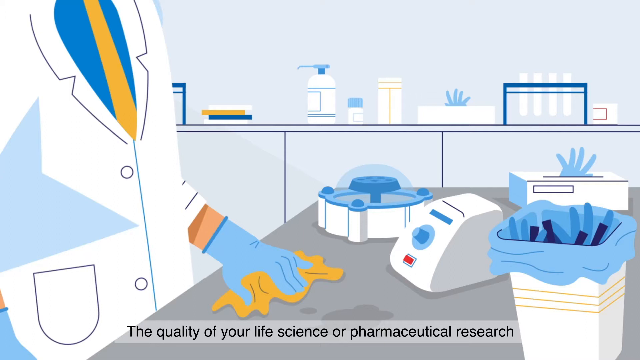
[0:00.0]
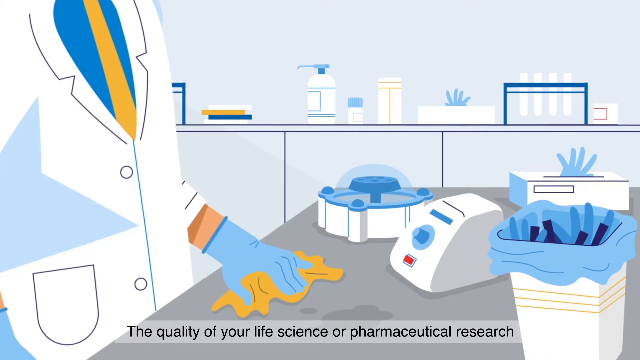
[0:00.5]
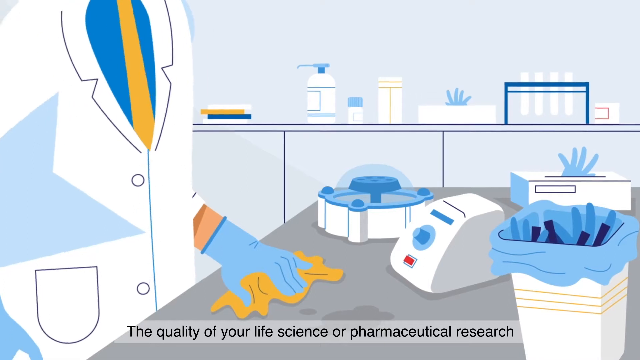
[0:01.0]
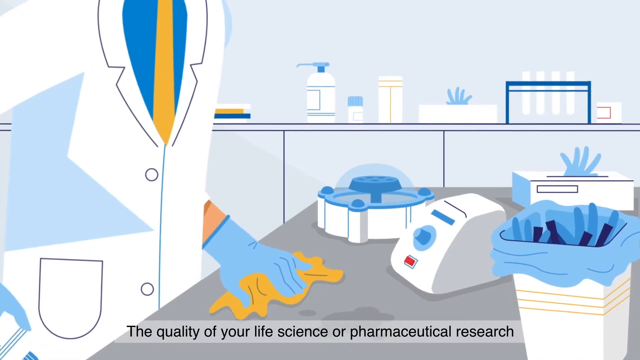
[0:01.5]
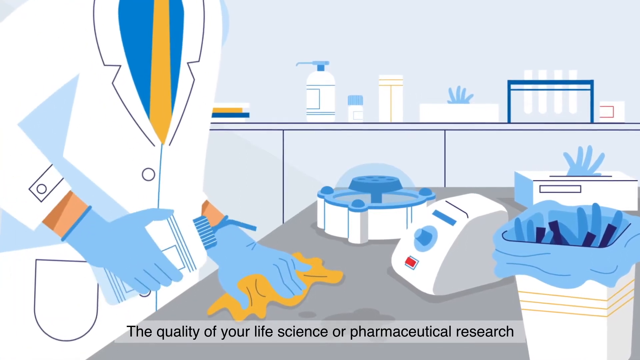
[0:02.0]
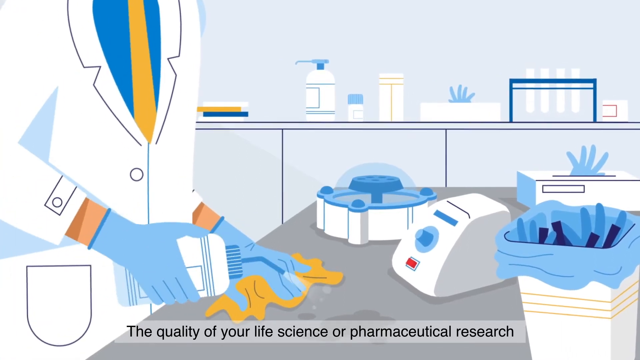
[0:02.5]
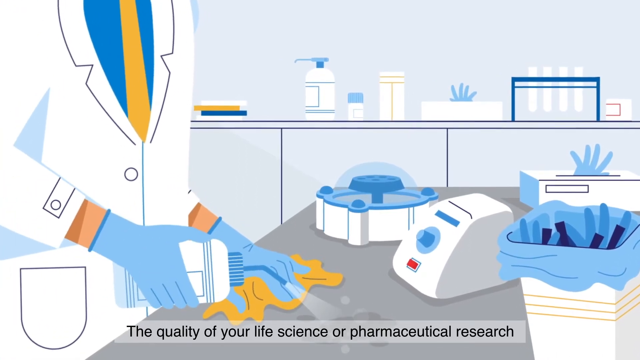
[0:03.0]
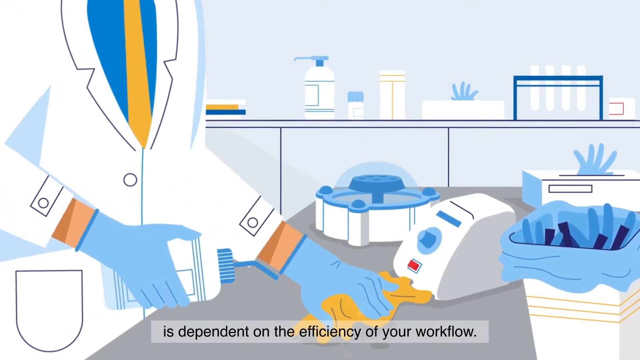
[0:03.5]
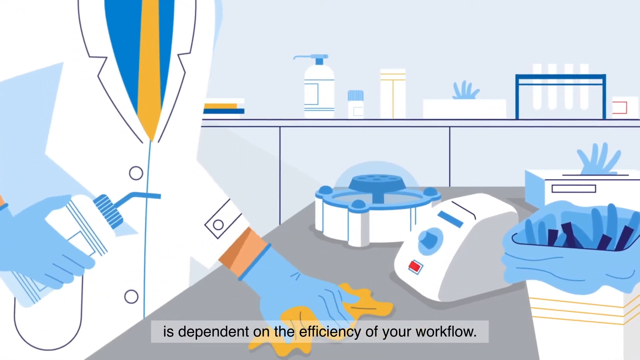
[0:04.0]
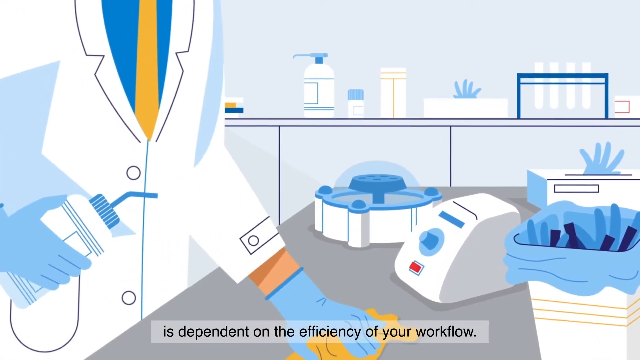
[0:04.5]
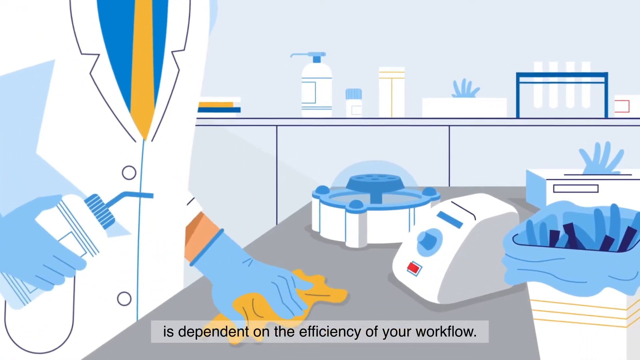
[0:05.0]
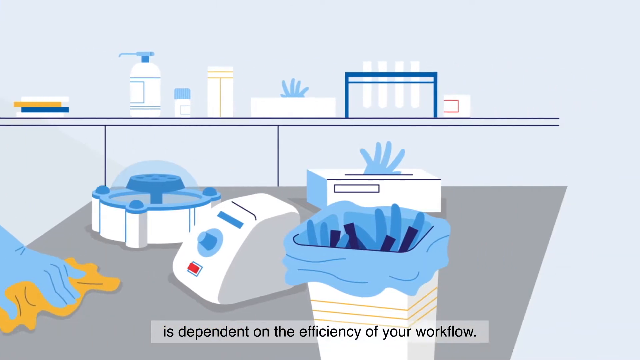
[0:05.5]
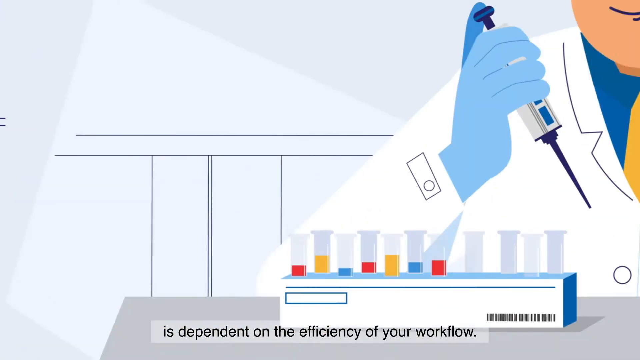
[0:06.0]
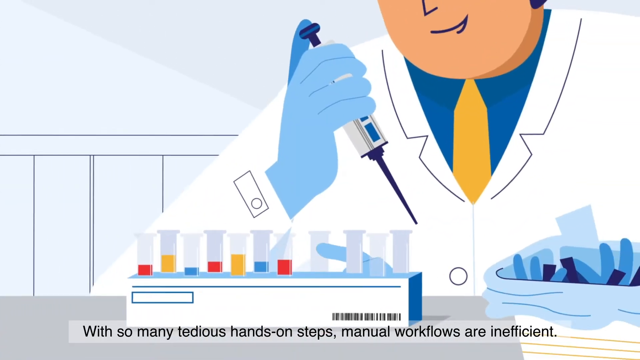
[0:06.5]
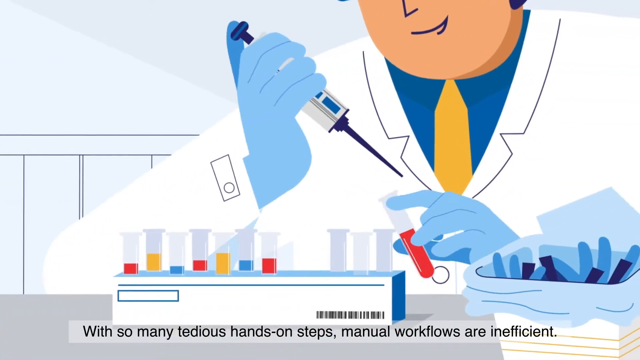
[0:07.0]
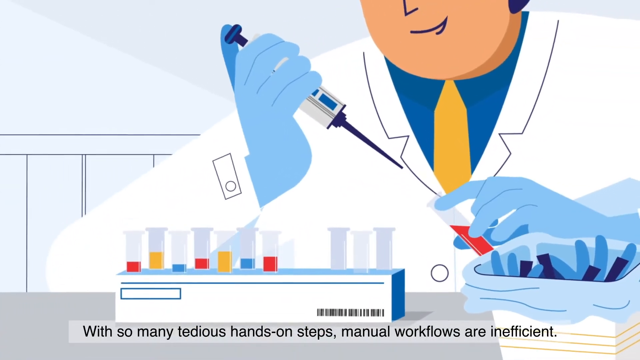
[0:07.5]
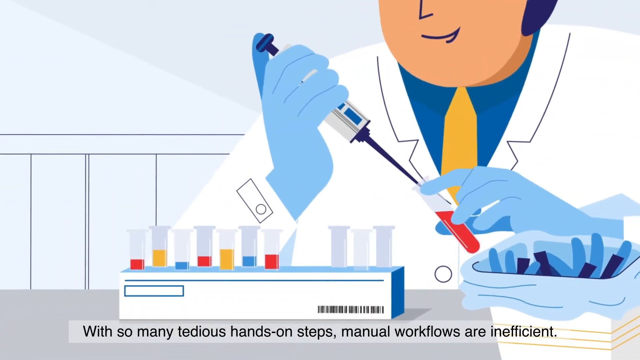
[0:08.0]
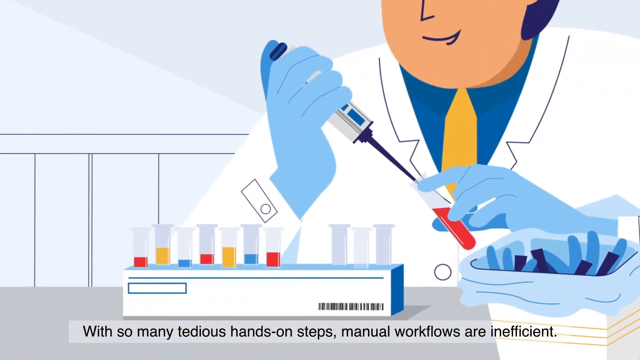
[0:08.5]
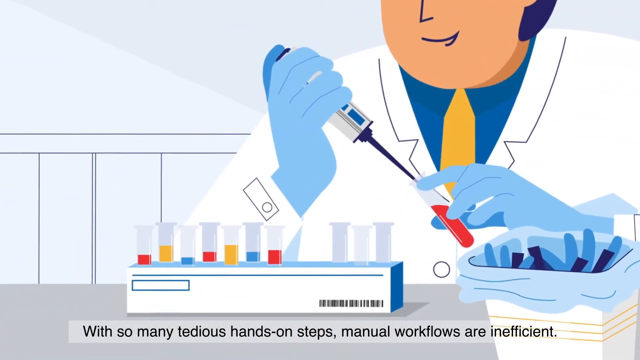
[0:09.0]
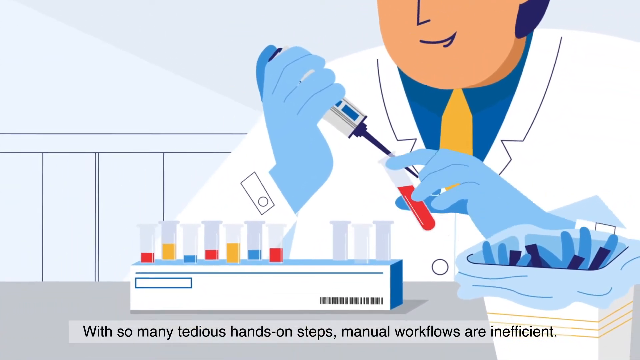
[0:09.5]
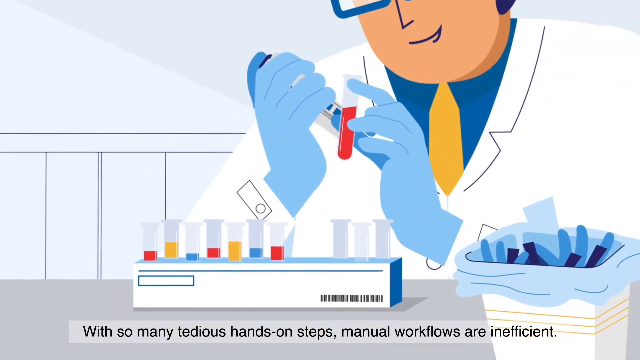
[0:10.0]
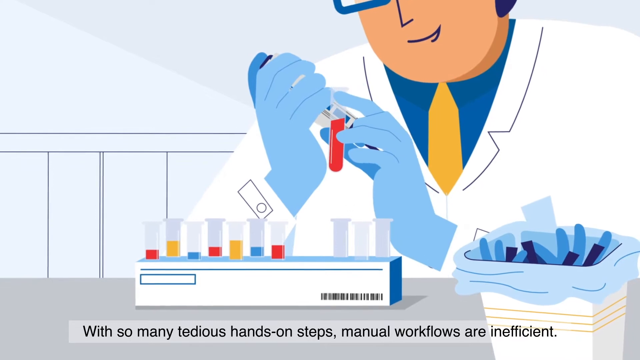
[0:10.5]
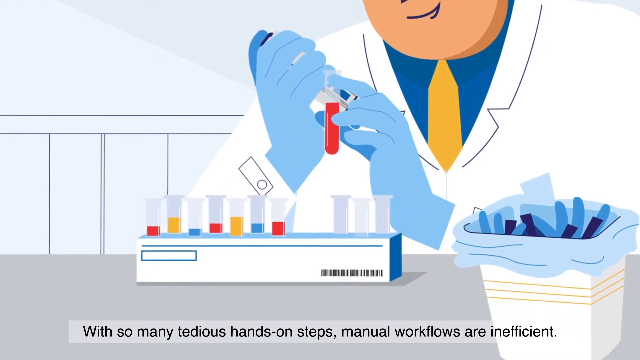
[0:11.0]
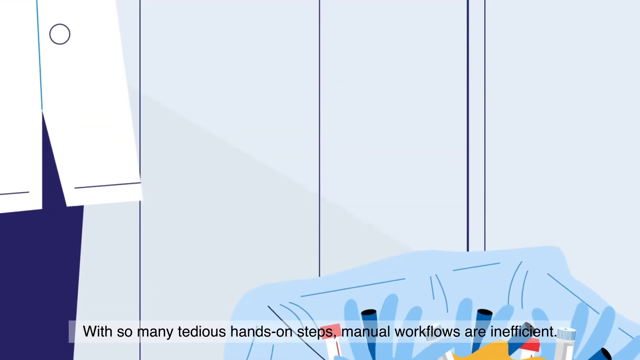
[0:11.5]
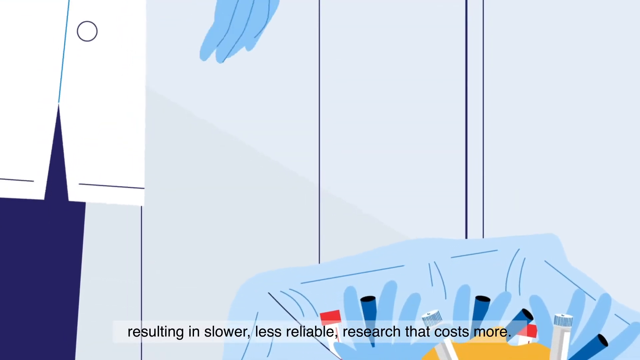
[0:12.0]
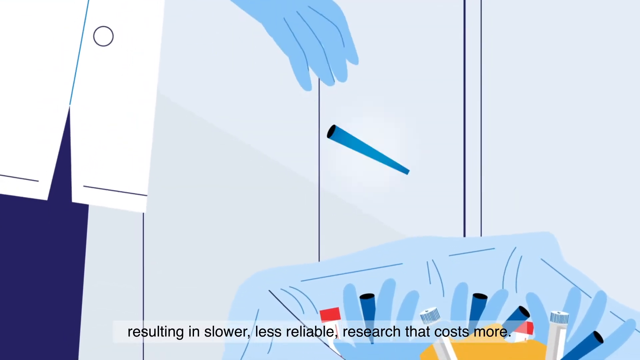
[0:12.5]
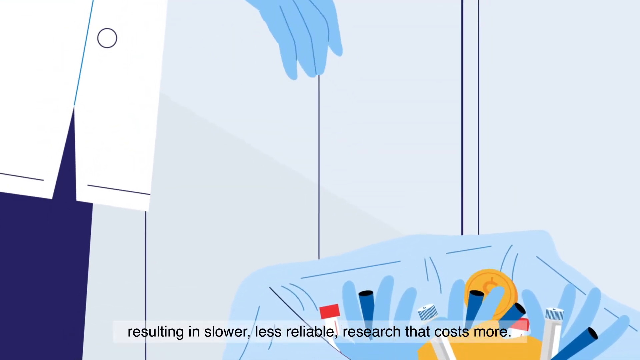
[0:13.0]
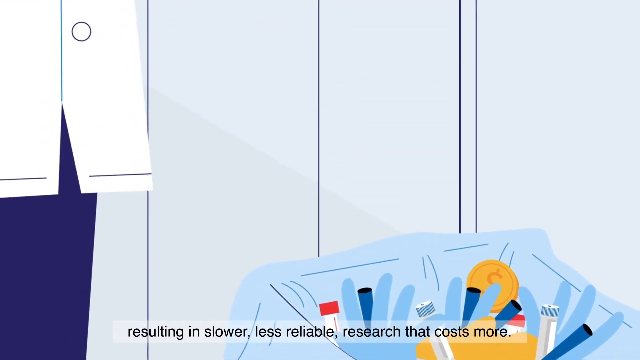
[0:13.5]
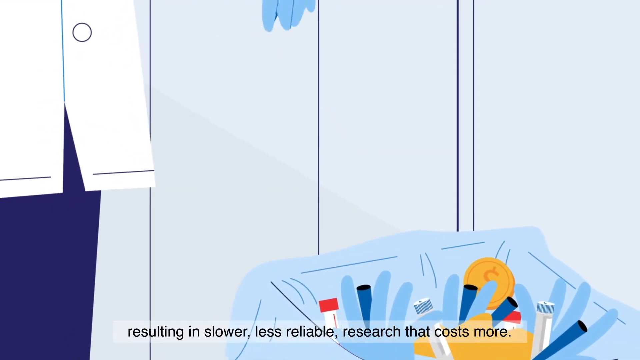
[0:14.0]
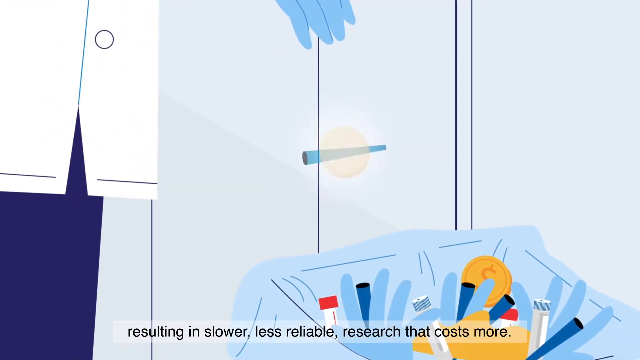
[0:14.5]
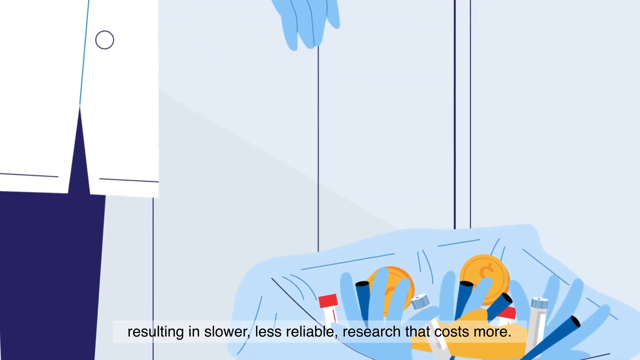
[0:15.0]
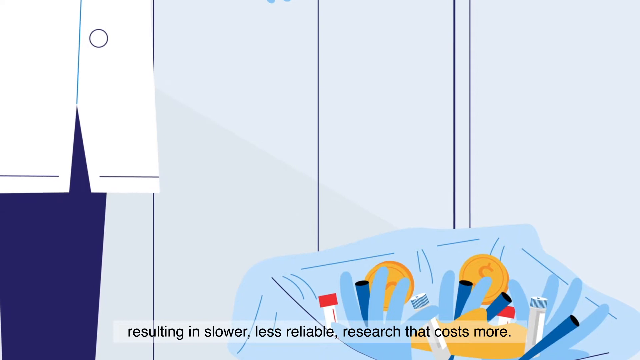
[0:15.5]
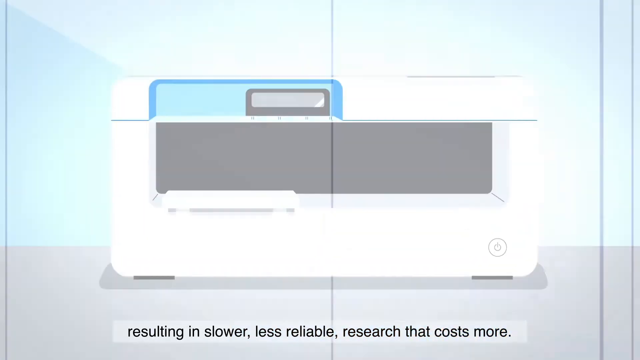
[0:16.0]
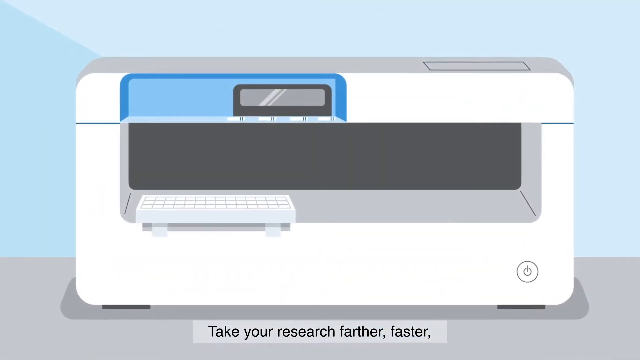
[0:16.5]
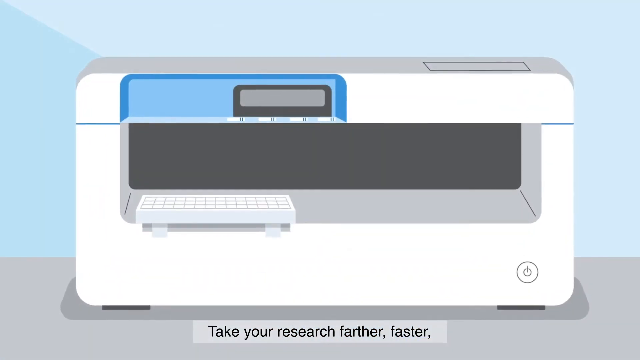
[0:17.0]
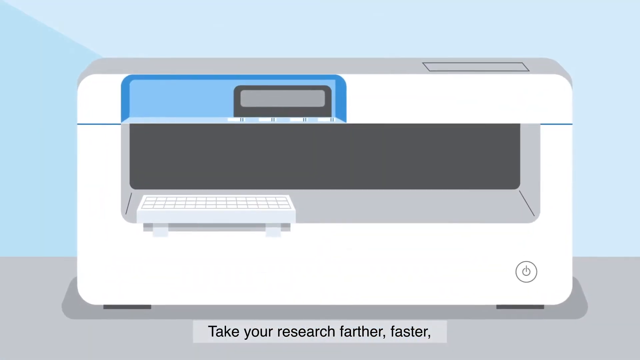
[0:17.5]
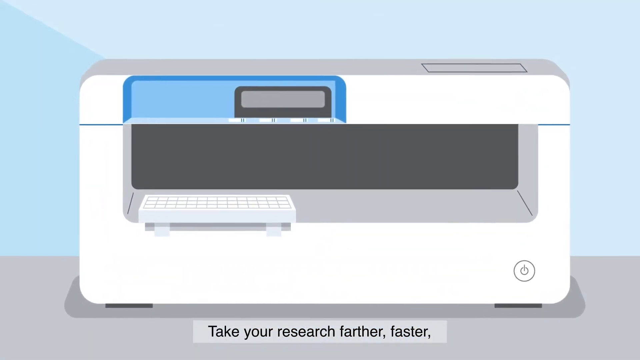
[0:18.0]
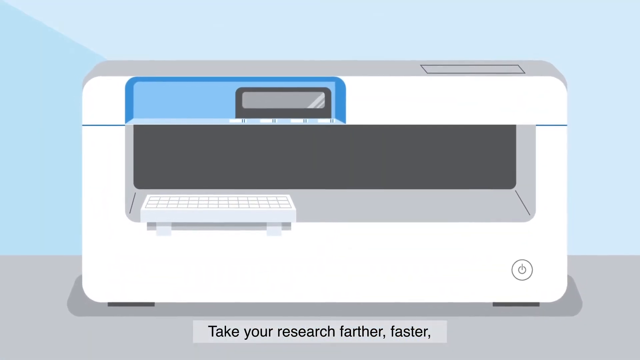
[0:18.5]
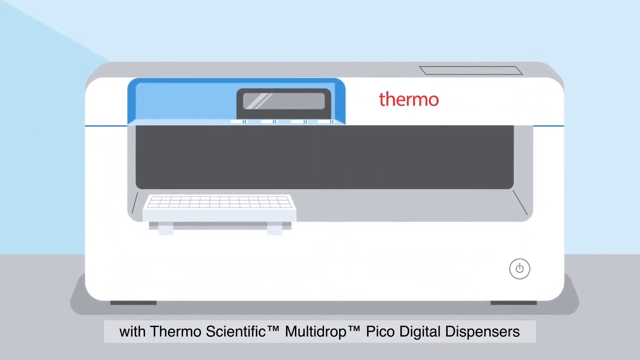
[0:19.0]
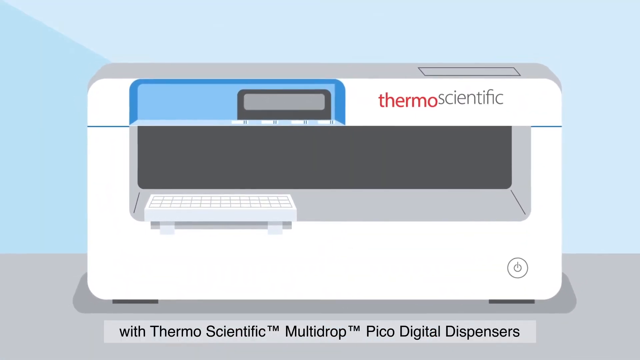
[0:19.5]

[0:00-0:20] A cartoon illustration shows someone in a lab coat with a blue dress shirt and a yellow tie, wiping a table with a yellow cloth and wearing a blue glove of some sort. There is some equipment on the table, including a box of gloves. In the background there is another cabinet table holding gloves, vials, a bottle of lotion or some other substance, another bottle and some books. The cartoon character sprays something on the surface of the table and starts wiping with the cloth again. Next, a cartoon person puts something in a vial with a needle nose syringe. The cartoon person then throws something in the trash, which holds a variety of items, including some gloves. Then a cartoon illustration of some kind of machine appears, with a power button and a little LED screen. Behind the machine is a blue wall, and the machine is sitting on a gray table.